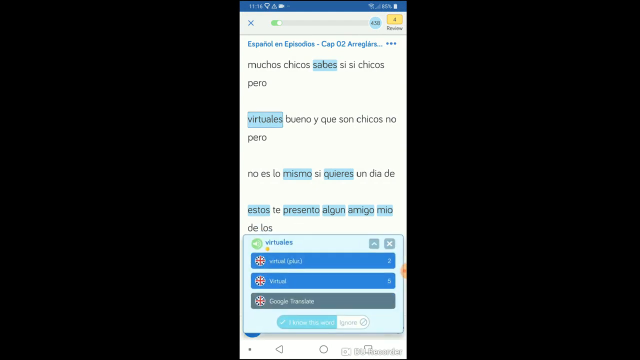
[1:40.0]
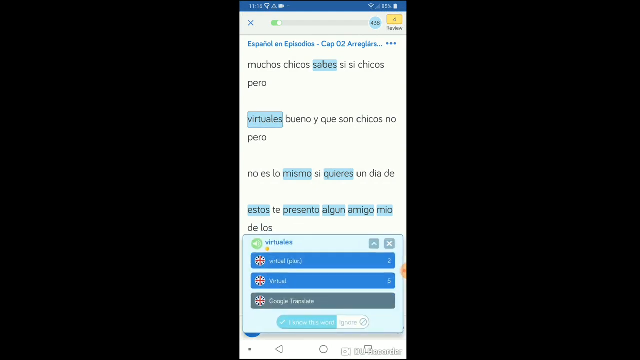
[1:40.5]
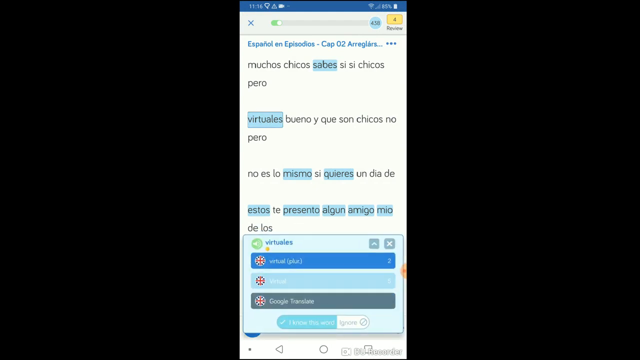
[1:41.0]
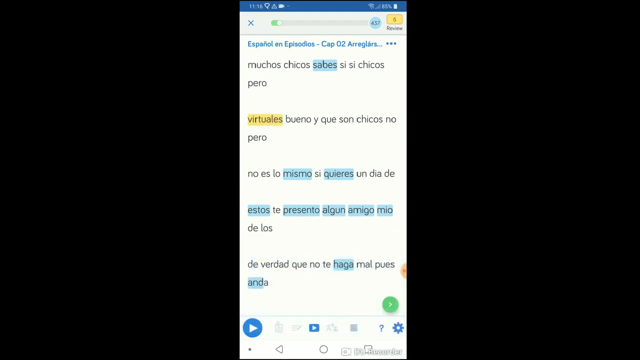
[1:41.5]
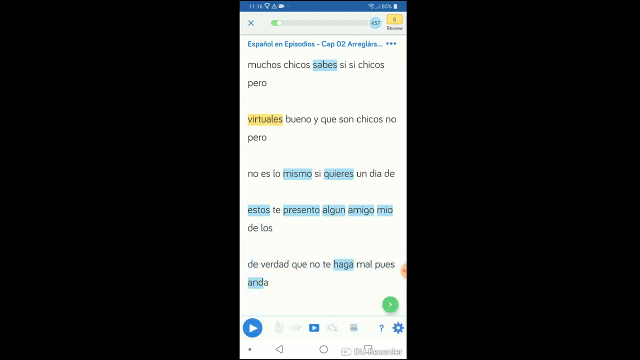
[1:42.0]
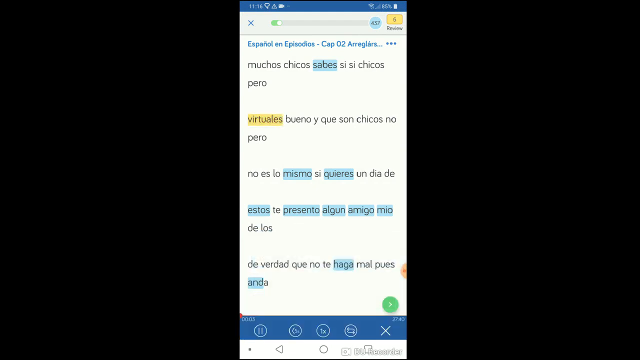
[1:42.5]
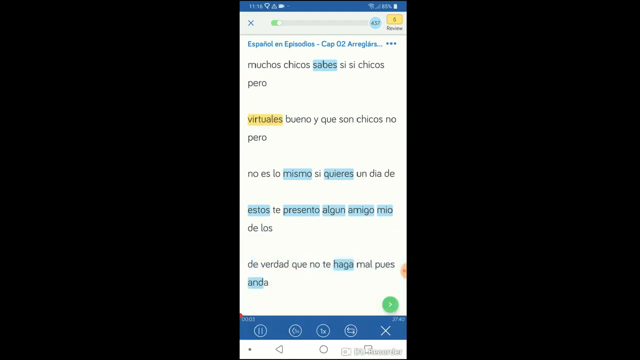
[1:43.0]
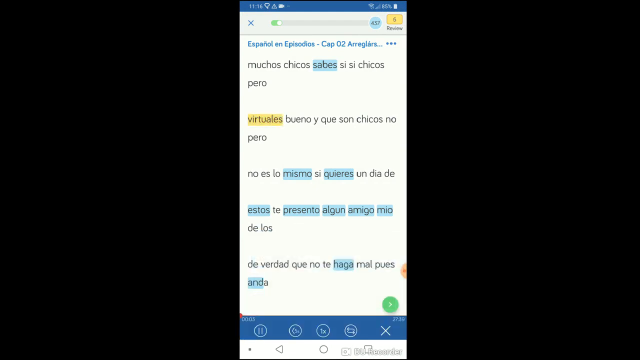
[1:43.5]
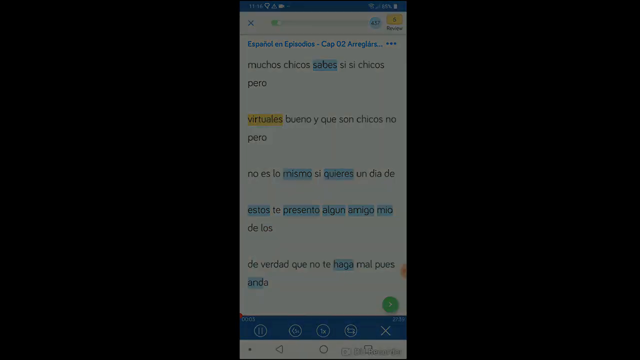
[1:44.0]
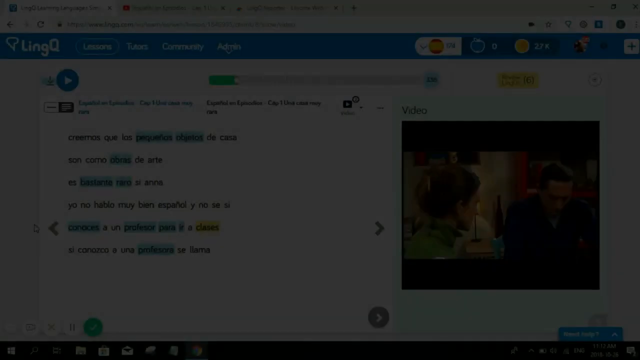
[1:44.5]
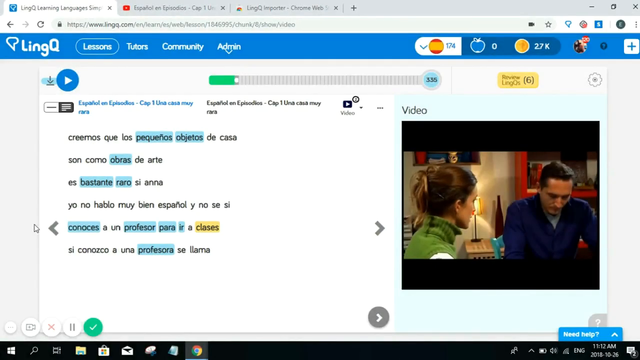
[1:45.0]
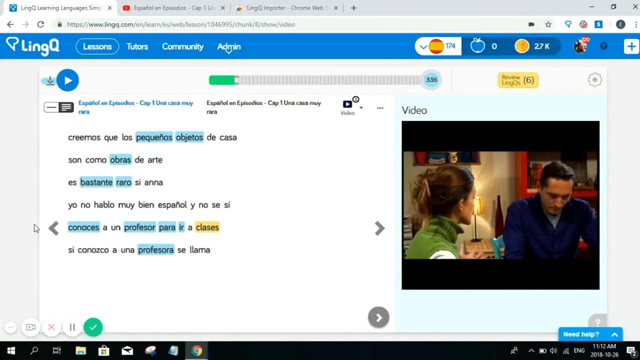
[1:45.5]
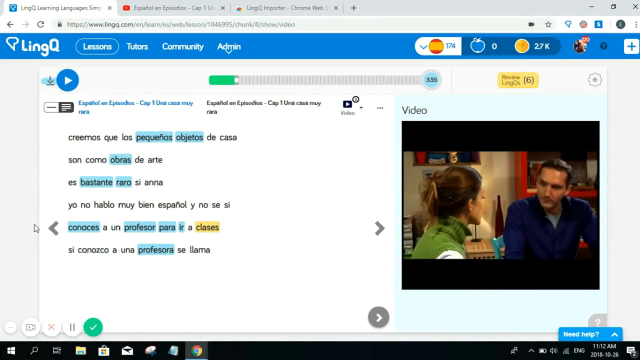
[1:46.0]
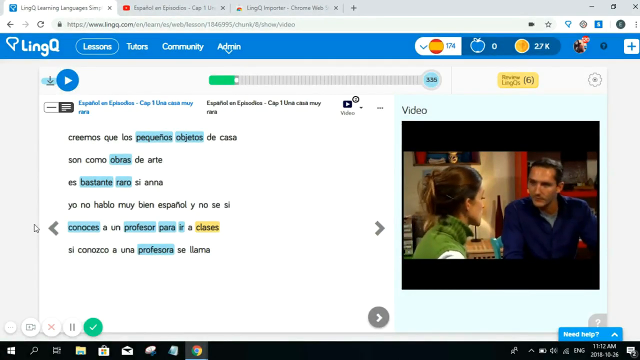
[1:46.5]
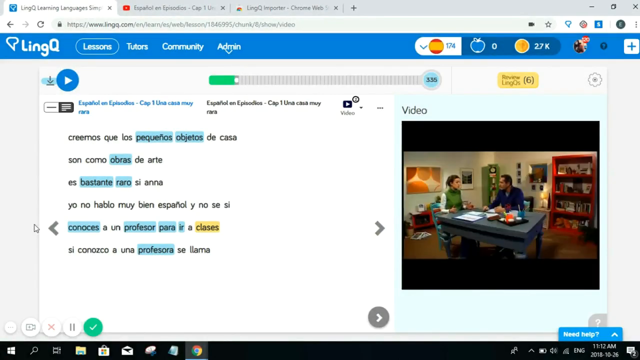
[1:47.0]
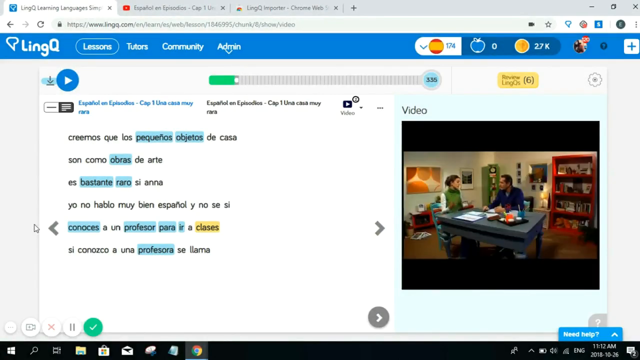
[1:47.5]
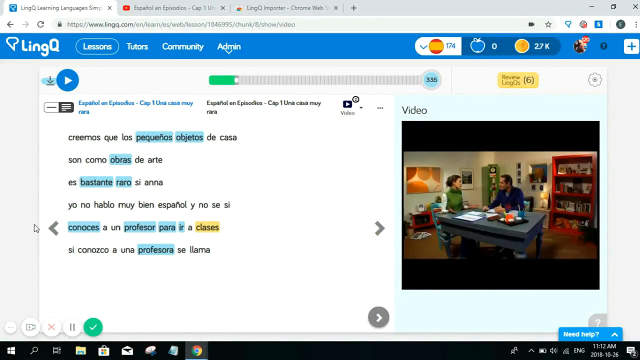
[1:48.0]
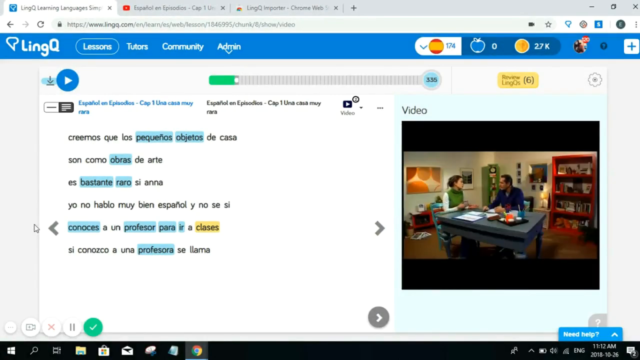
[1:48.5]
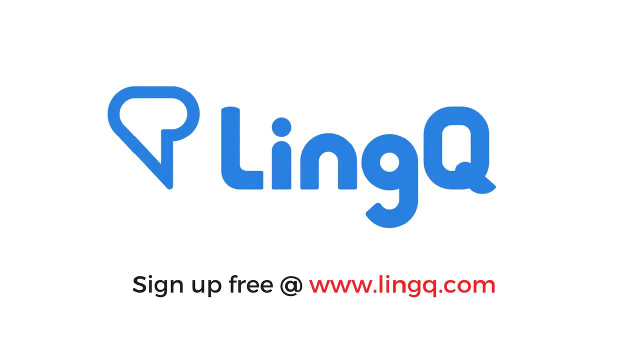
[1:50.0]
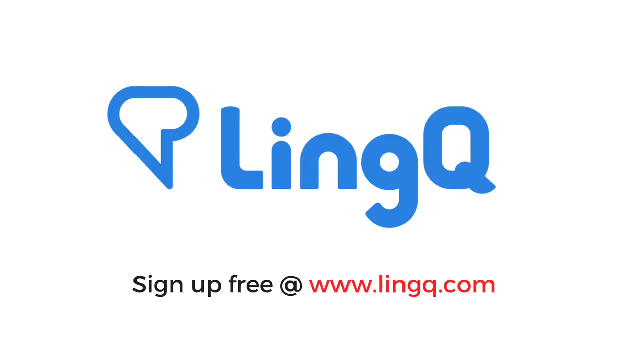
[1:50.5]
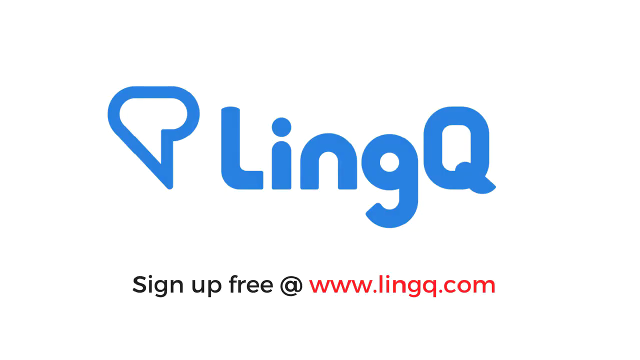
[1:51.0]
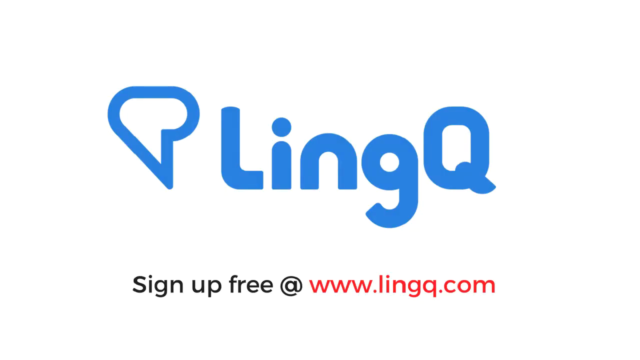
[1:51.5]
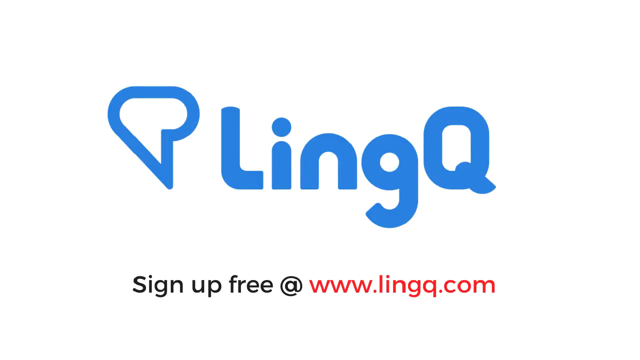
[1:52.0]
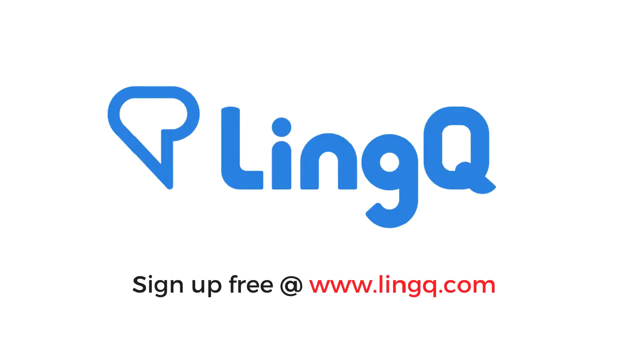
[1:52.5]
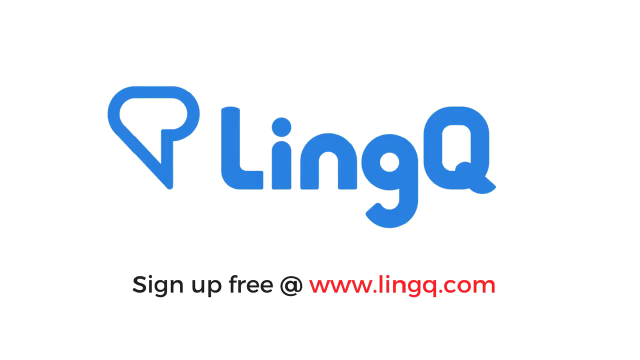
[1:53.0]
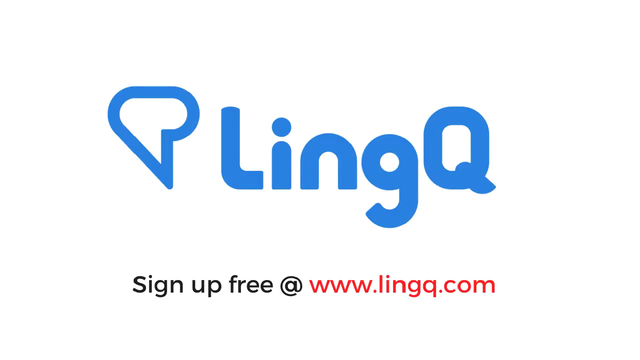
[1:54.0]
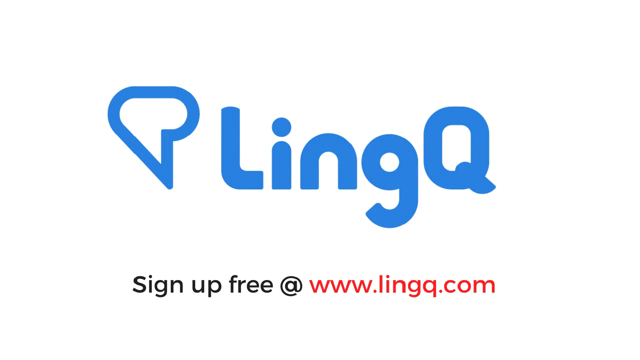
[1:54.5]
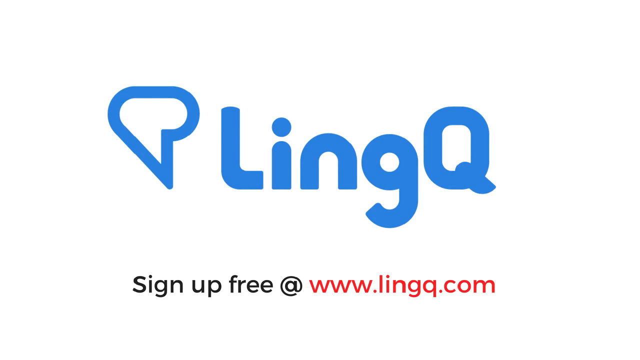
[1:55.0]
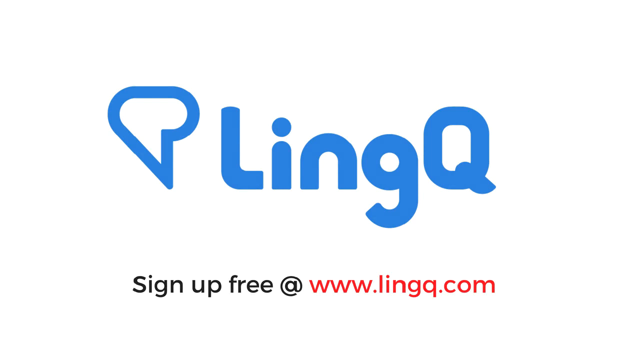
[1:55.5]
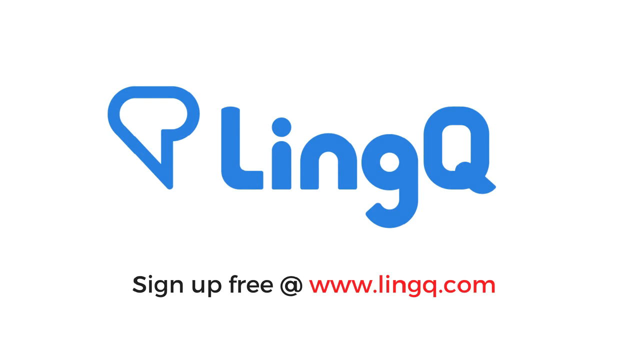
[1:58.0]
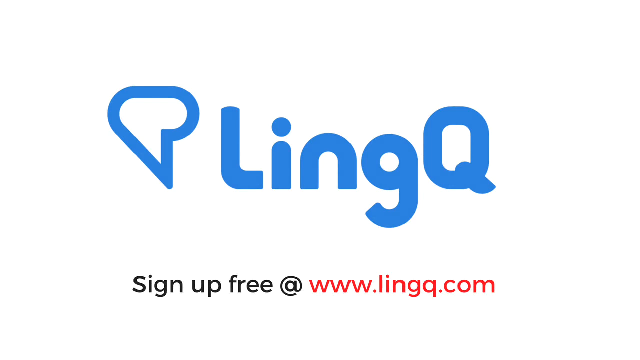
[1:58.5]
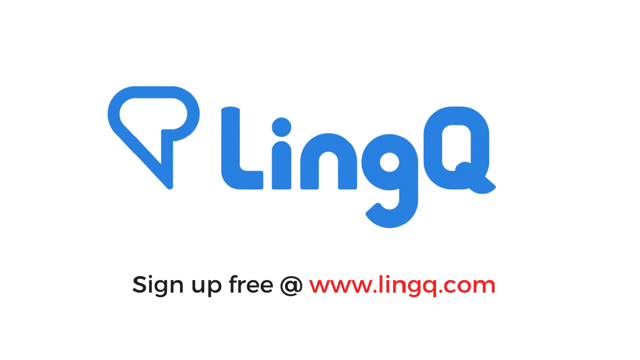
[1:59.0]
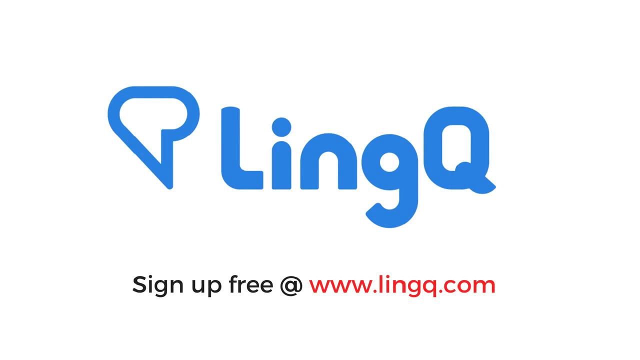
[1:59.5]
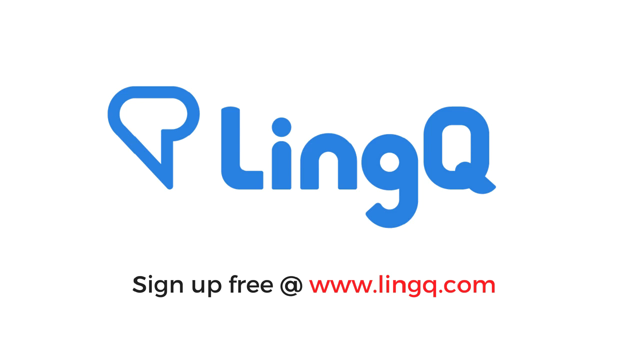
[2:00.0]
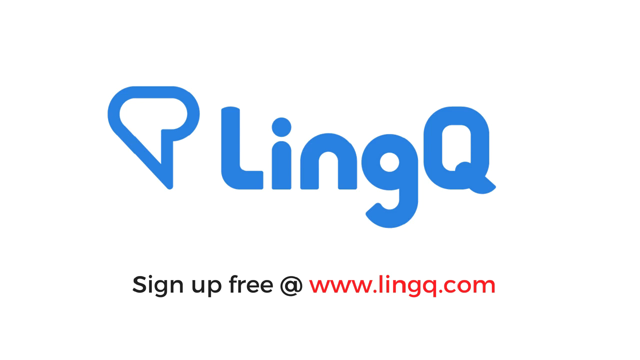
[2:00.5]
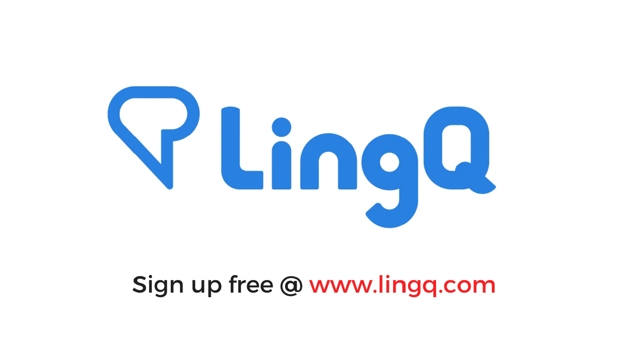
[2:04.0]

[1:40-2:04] In the small window, he clicks one of the blue-highlighted words and another pop-up appears, seemingly like a pop quiz. It has a little speaker icon next to the clicked word, two blue-highlighted choices, and a bottom option that says "Google Translate." At the bottom are two buttons that say "I know this word" and "ignore." Then a full screen appears with the Lingq logo: a white background, blue font reading "Lingq," and a symbol that looks almost like a conversation bubble. It says "sign up free at www.lingq.com."